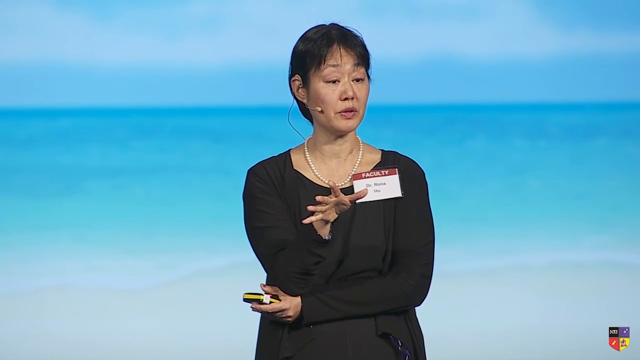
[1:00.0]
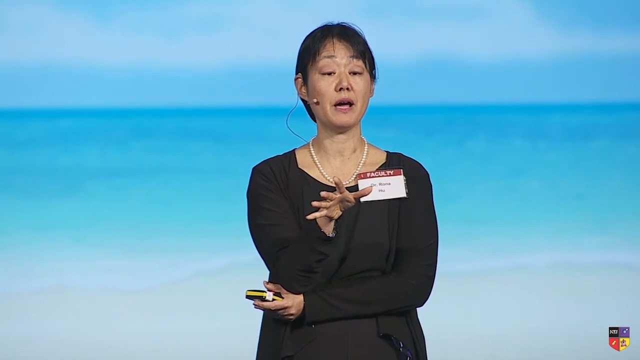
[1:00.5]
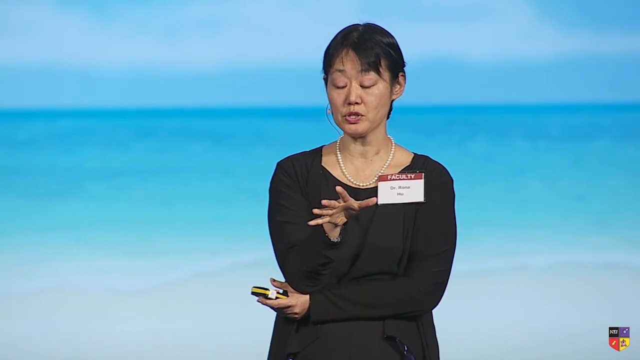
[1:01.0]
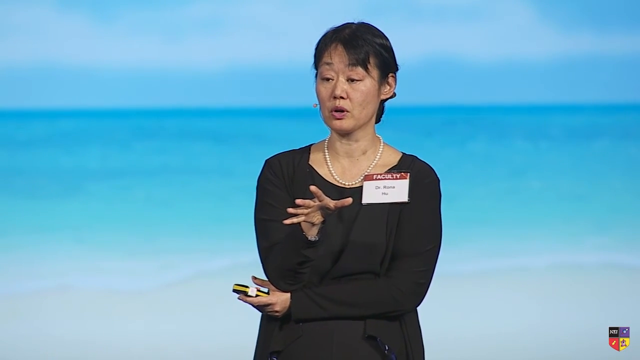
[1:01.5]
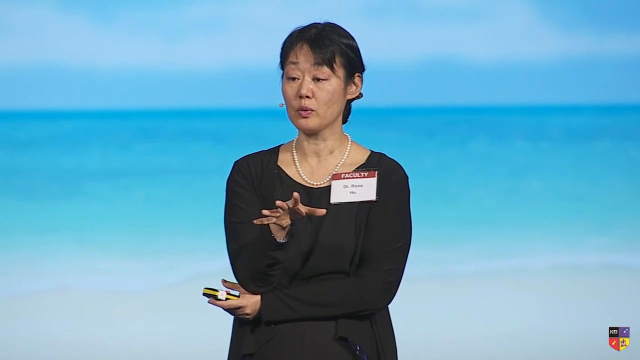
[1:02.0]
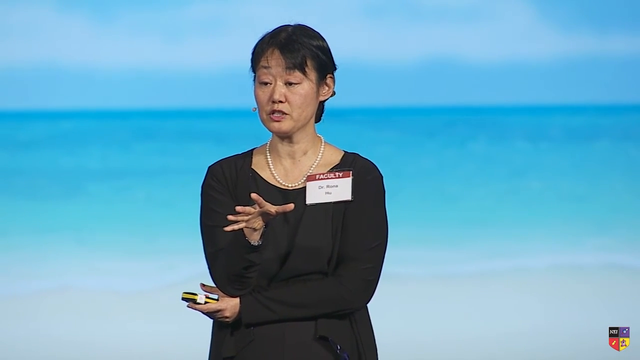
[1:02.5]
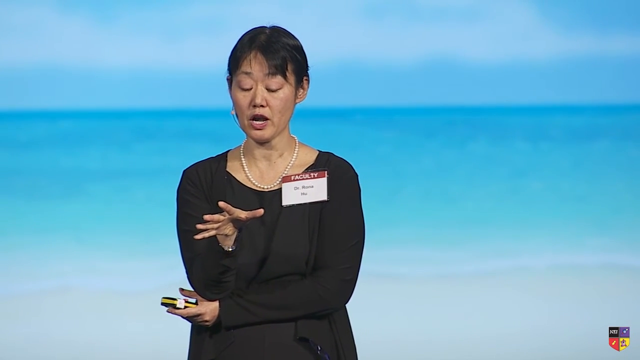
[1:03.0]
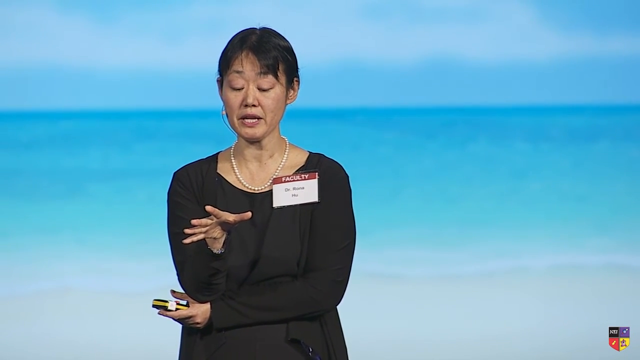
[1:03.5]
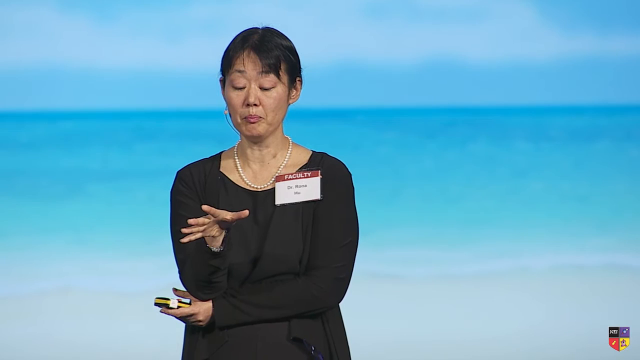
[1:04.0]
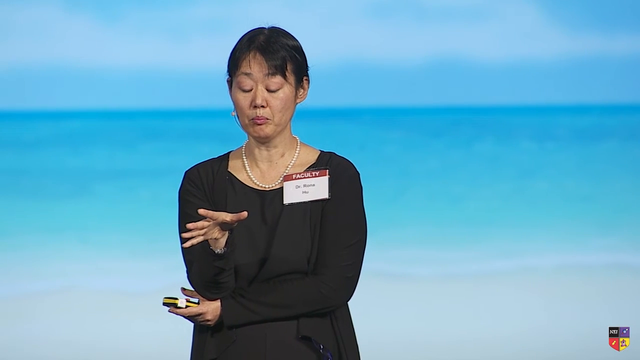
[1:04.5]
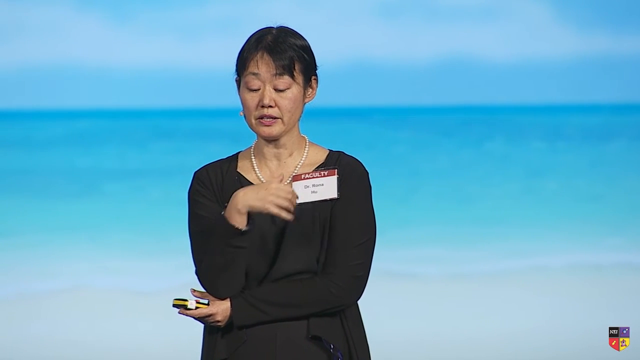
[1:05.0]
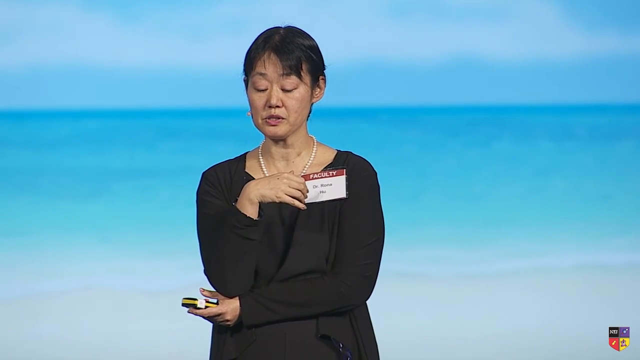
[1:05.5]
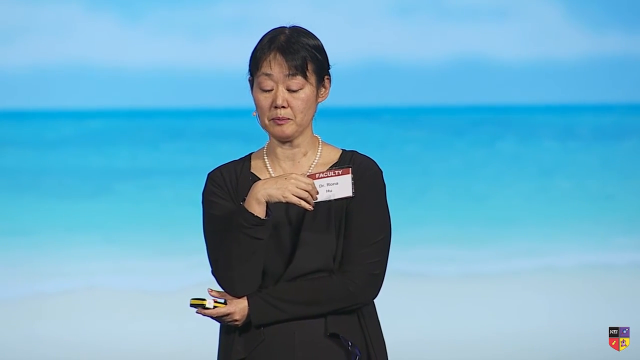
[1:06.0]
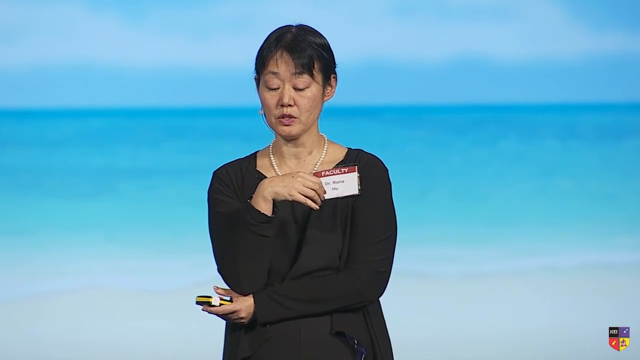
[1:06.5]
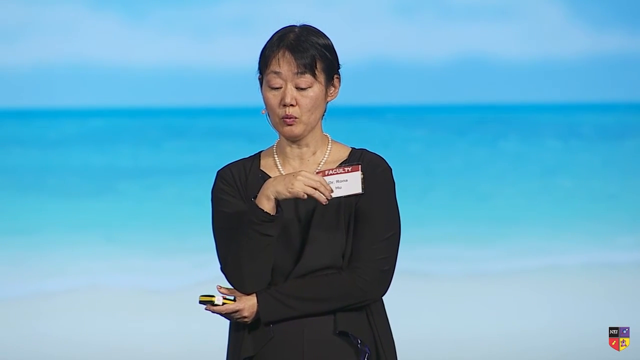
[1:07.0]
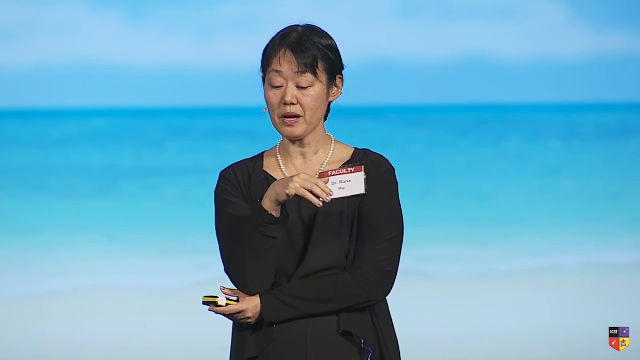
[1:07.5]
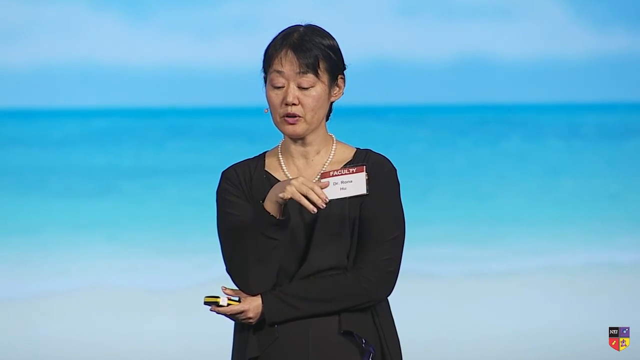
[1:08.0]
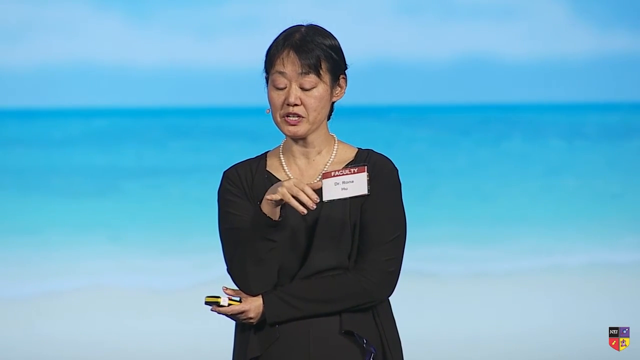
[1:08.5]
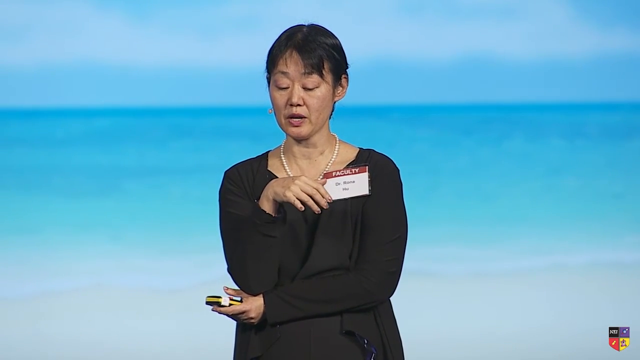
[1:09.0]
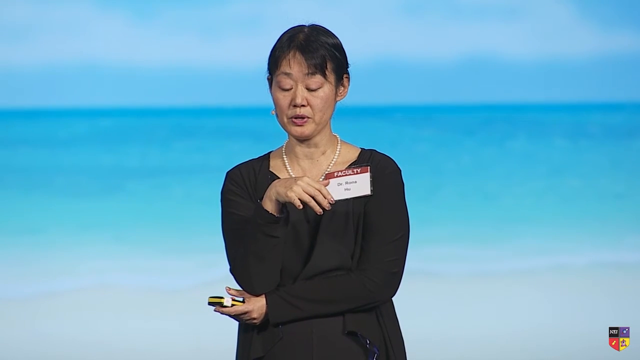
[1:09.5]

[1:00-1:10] An Asian woman is speaking. Her hair is either pulled back in a ponytail or short. She wears white pearls and what looks like a black long-sleeved shirt that maybe goes into a dress. She appears to be holding a clicker, and she may be the one presenting and clicking through the slides. Behind her is a blue background. She has one hand in the air, gesturing with all fingers spread, while holding the clicker in the other hand. She is kind of looking down at something as she speaks. She wears a cheek mic that goes around her ear and comes around to the side of her cheek by her mouth, so she does not have to hold a mic. She moves her hands back and forth, then has her hand on her name tag as she speaks. She is also looking down, maybe at a computer or possibly at her notes. She wears no other jewelry, such as rings.